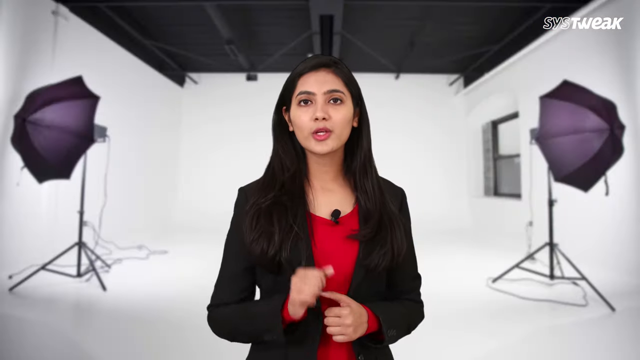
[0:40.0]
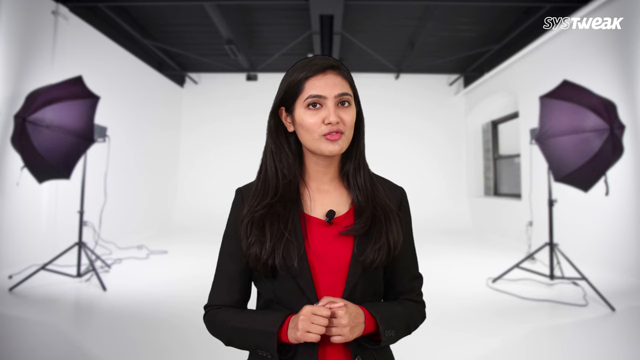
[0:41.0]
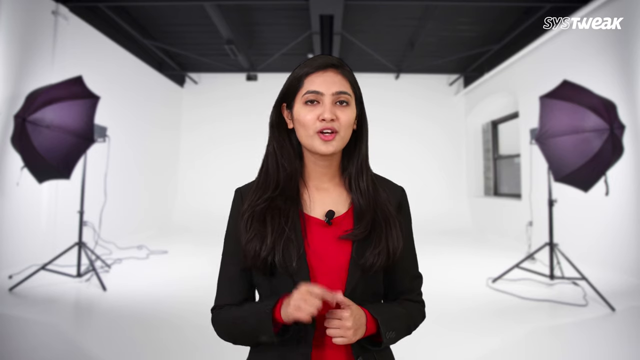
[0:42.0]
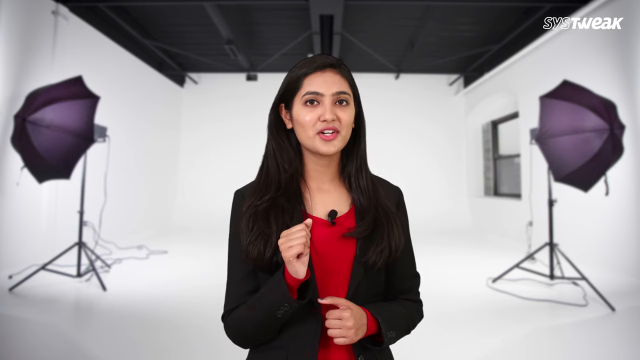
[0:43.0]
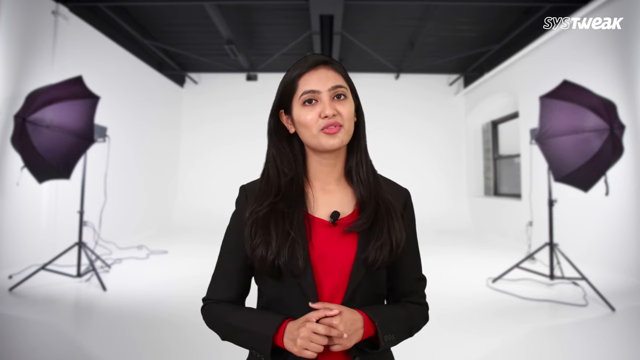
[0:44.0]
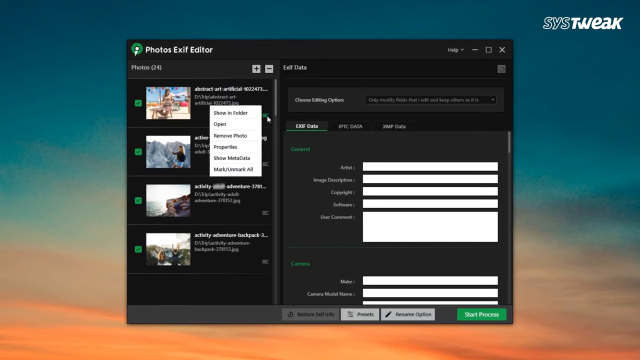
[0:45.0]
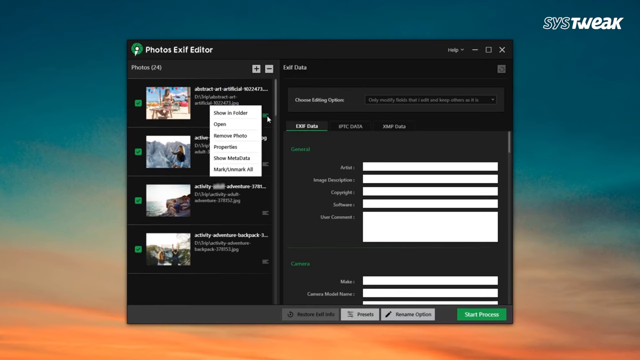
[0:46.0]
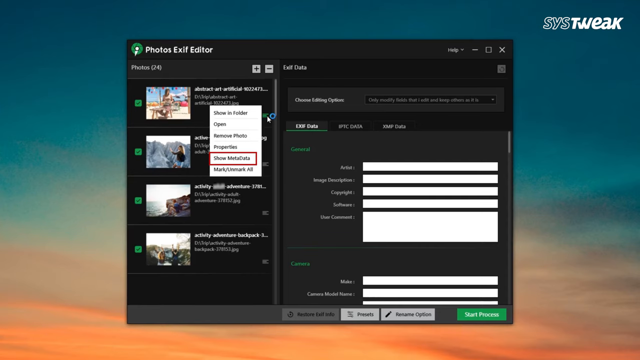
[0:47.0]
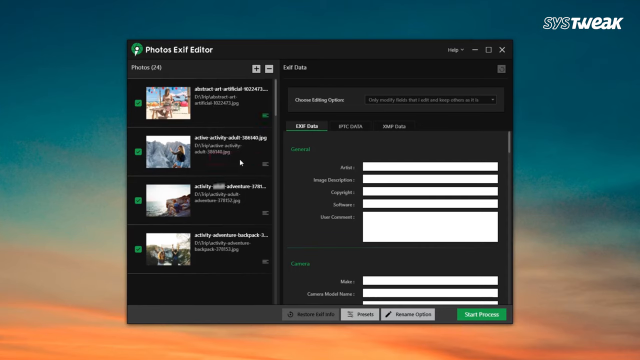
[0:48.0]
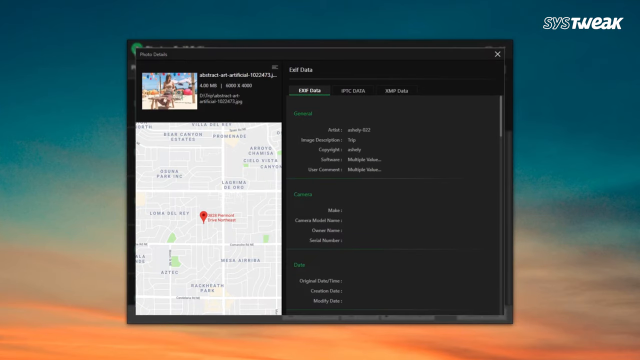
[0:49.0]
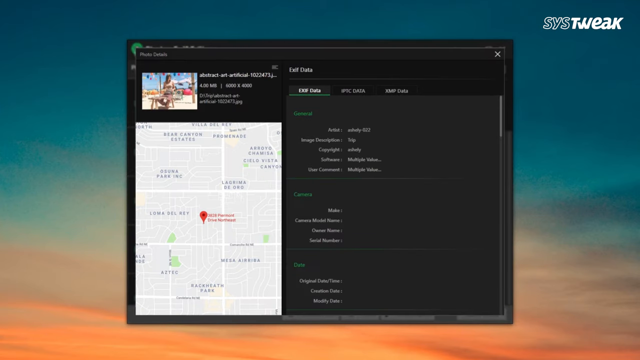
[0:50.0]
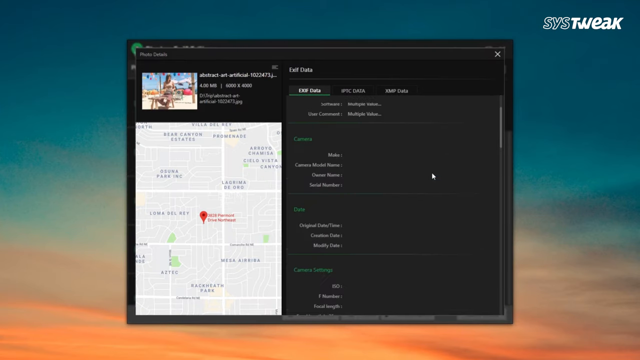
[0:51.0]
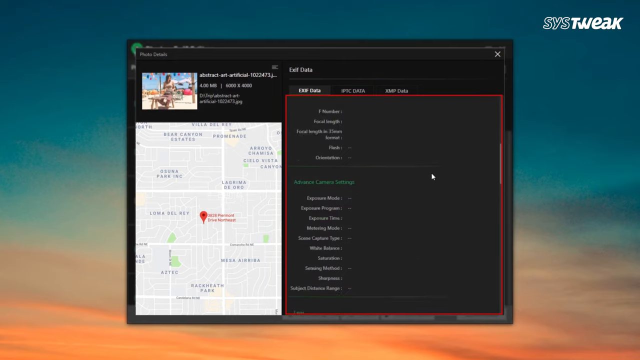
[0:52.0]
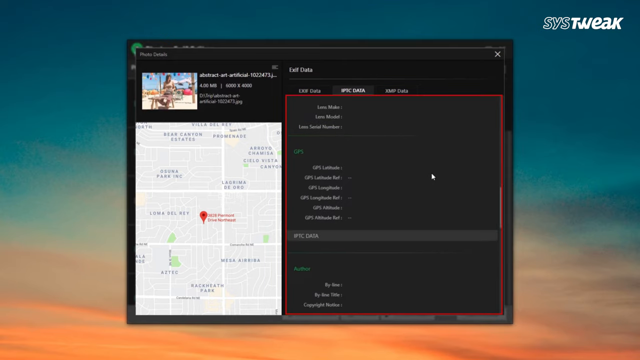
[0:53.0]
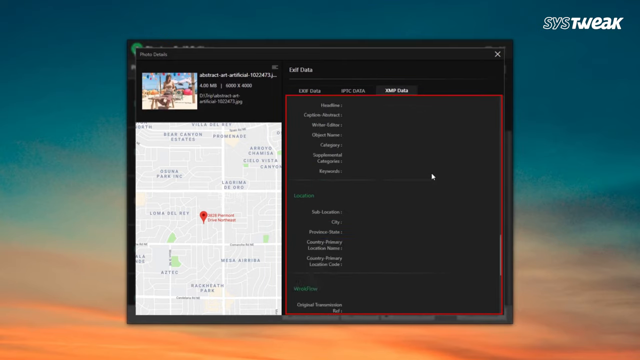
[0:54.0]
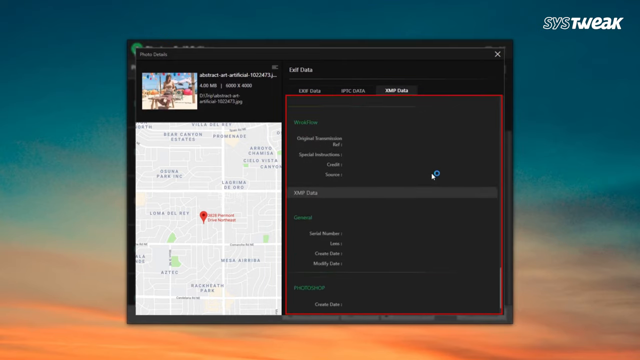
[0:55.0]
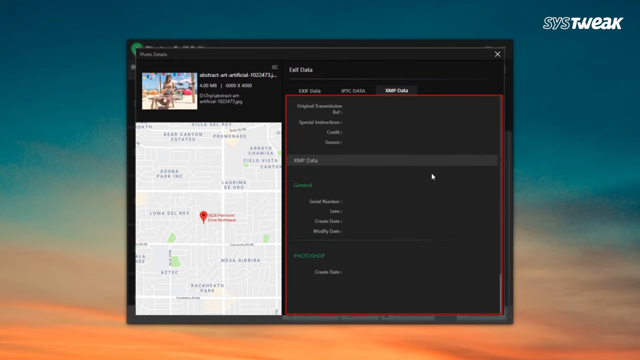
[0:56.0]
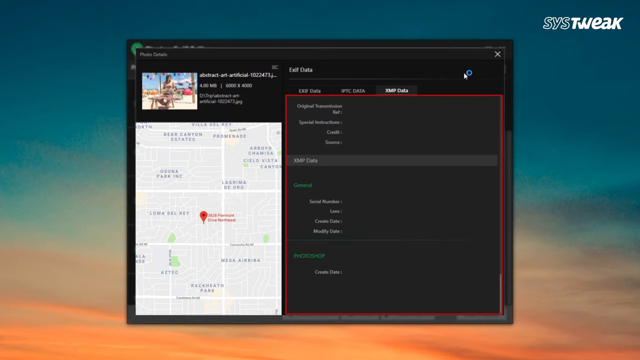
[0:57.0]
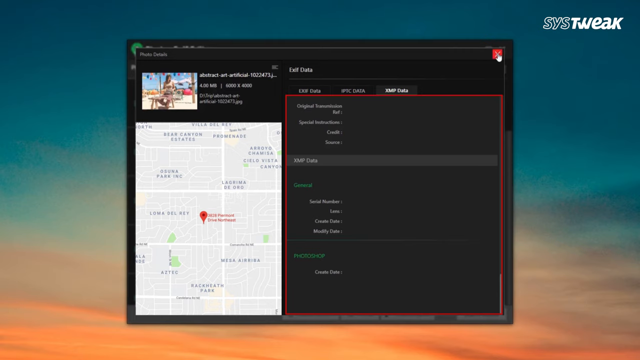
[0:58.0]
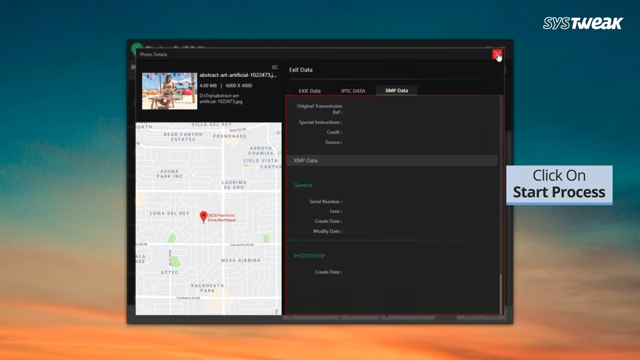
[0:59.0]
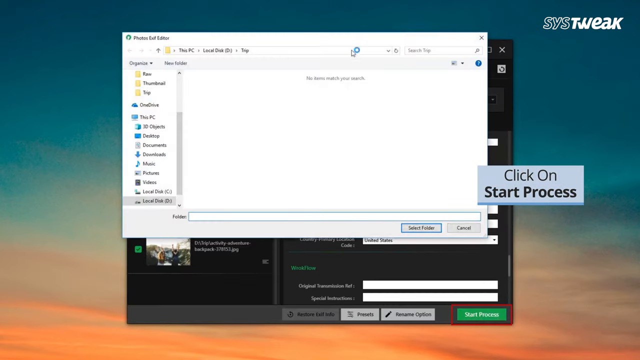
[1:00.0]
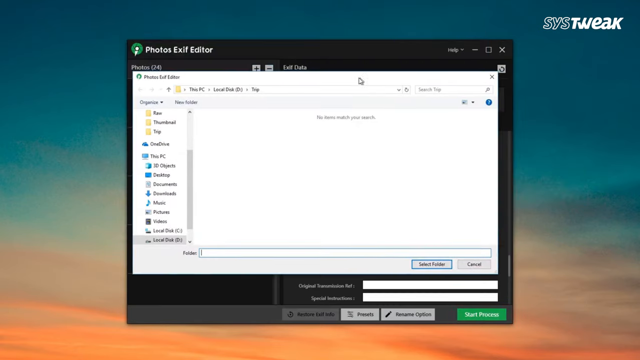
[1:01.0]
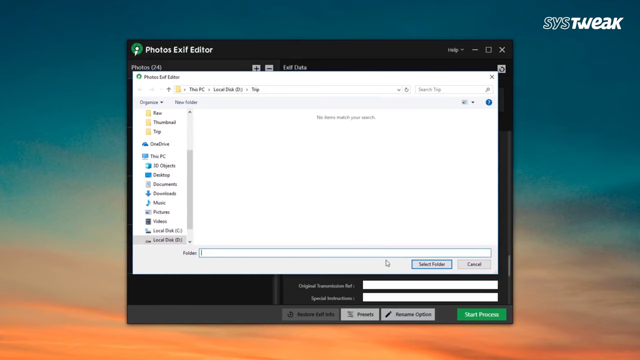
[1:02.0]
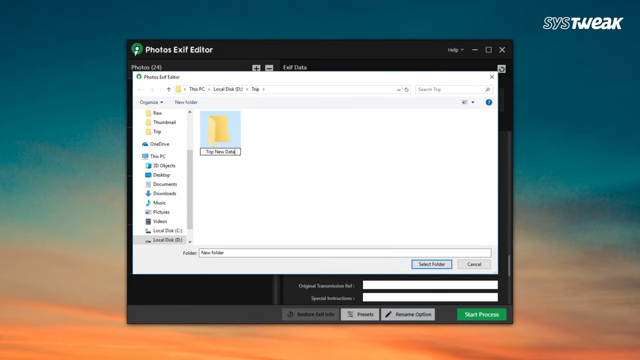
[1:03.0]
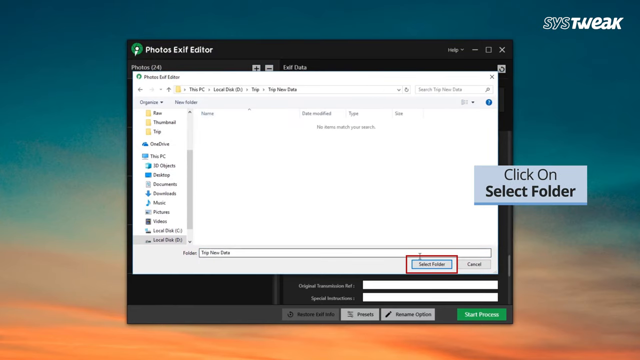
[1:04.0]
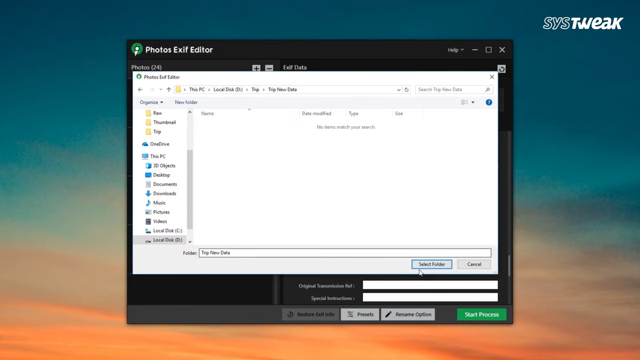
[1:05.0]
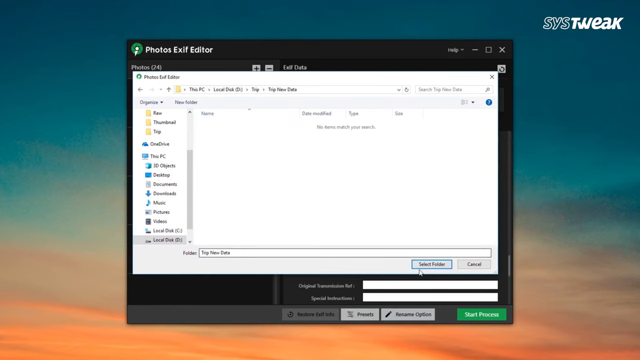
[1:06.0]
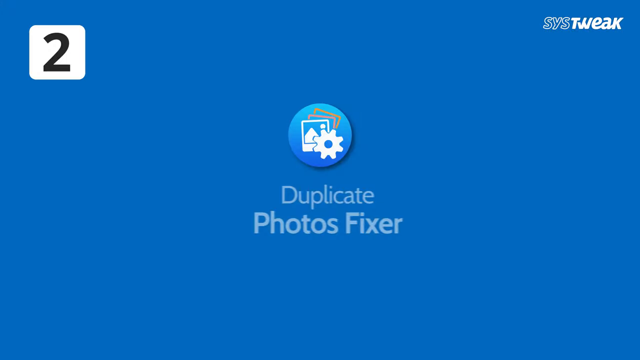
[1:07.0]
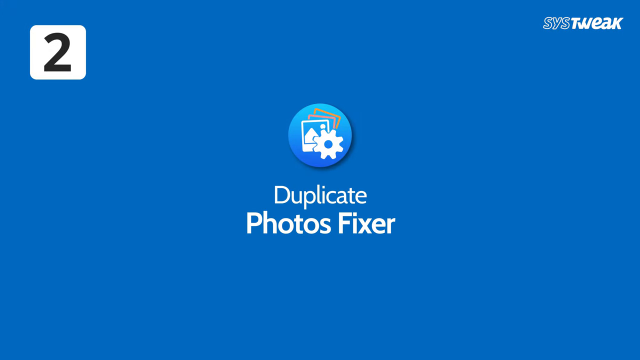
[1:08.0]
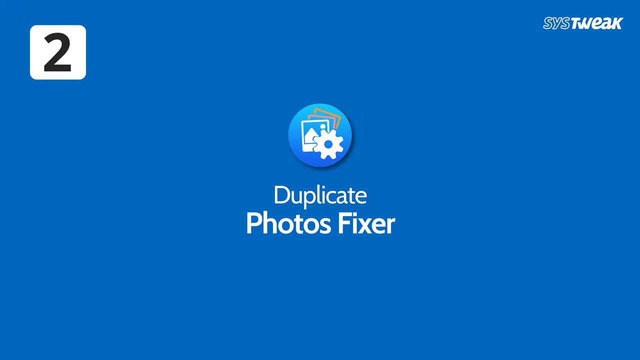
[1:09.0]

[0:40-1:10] The woman in the black and red outfit speaks into the camera. The room around her is all white, with just the two purple camera stands on either side of her. The desktop view of Photos Exif Editor follows. A cursor clicks on an icon, and different options appear in a white box that pops up. The person clicks on an option, and a single photo appears in the top left corner of the screen, with a map below it that has a red pin in the middle. Details are on the right, and the person uses the cursor to scroll through them; this box is highlighted in red on the screen. The person keeps scrolling, then hits the X button in the top right corner to exit that screen. Another screen pops open with a caption that states "click on start process." The person drags the window and hits select folder, and then another graphic with a blue background enters the screen.